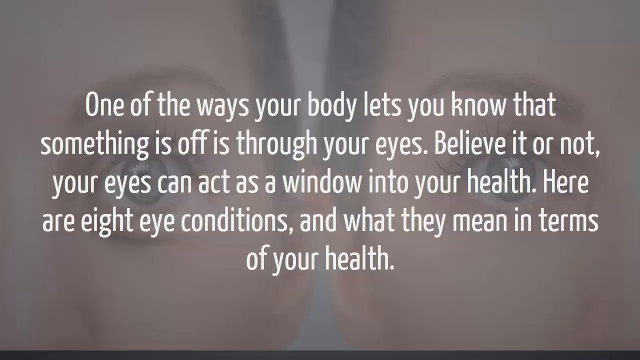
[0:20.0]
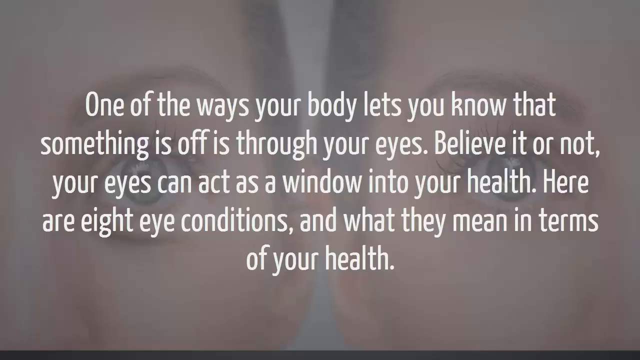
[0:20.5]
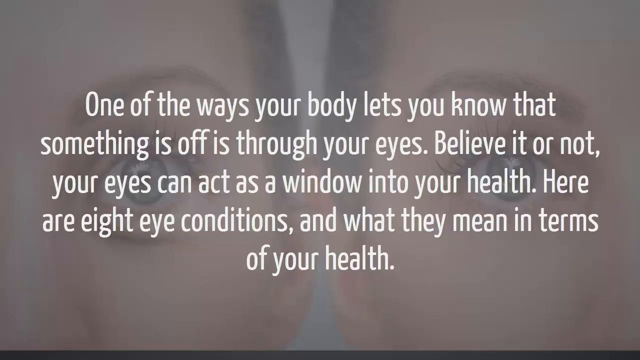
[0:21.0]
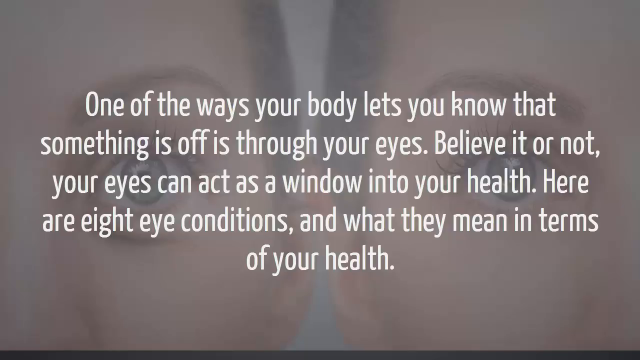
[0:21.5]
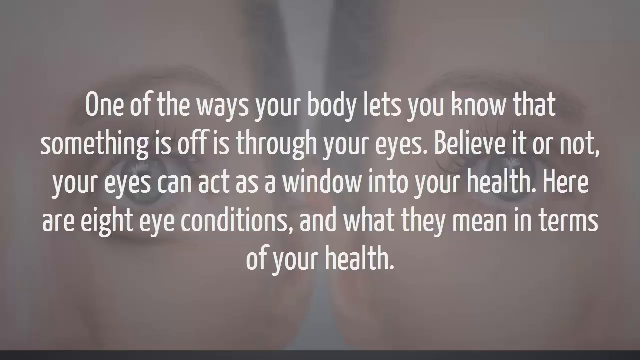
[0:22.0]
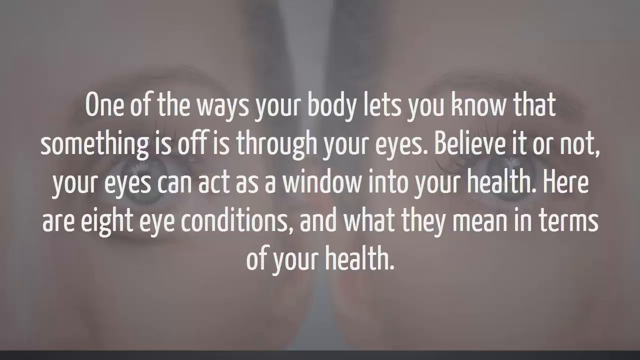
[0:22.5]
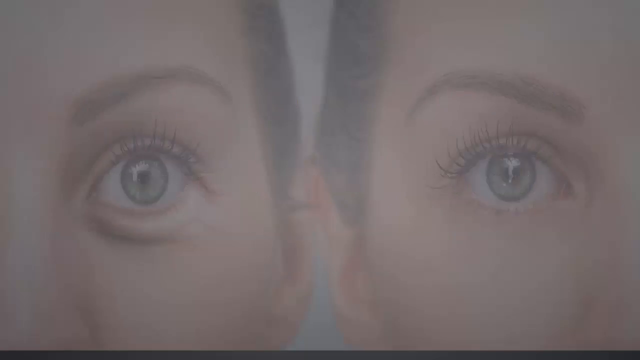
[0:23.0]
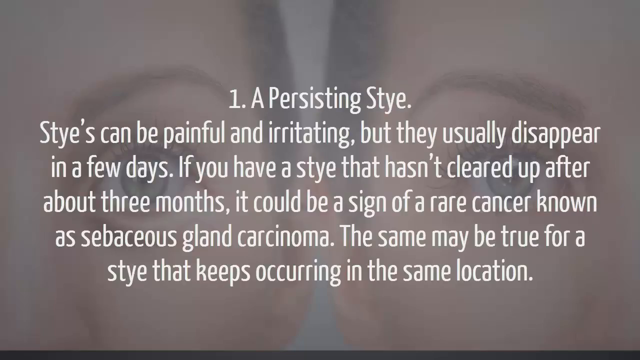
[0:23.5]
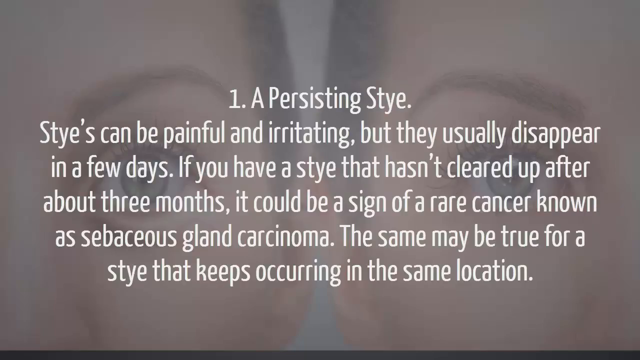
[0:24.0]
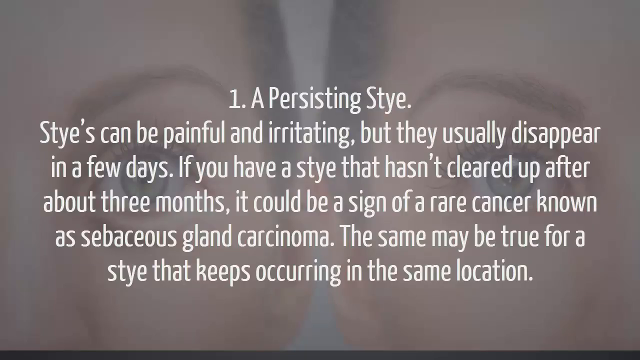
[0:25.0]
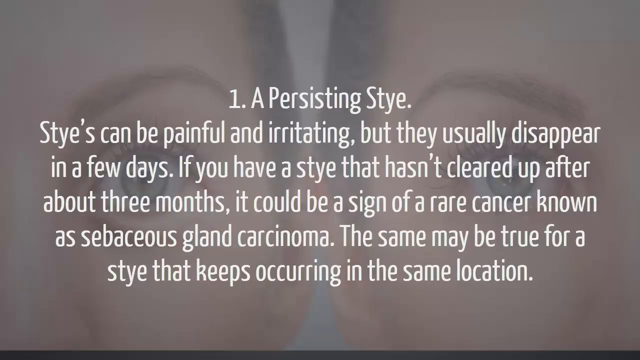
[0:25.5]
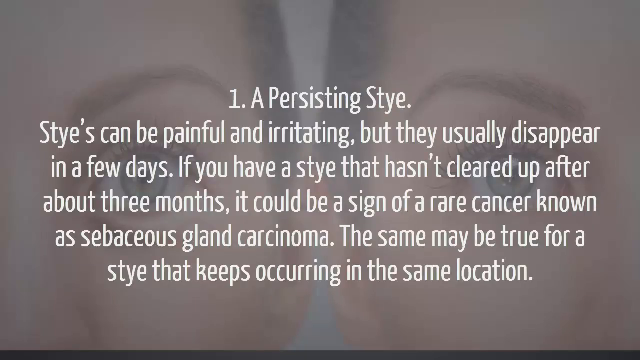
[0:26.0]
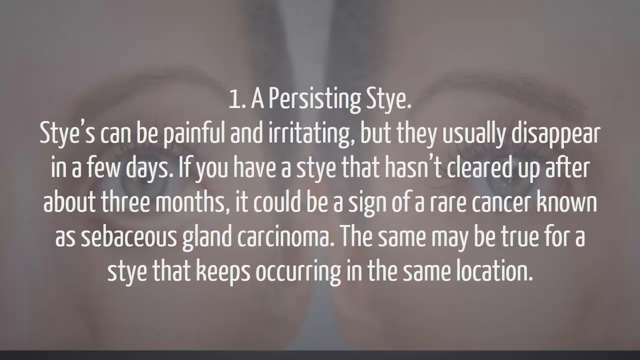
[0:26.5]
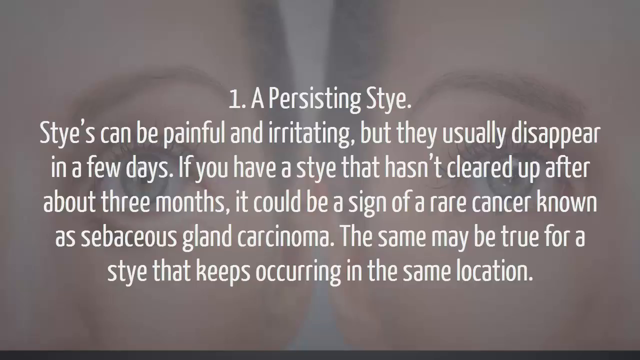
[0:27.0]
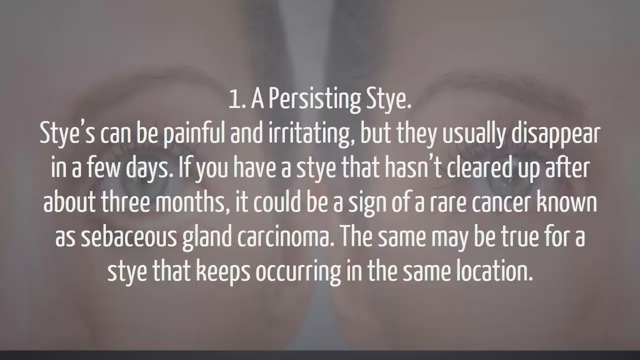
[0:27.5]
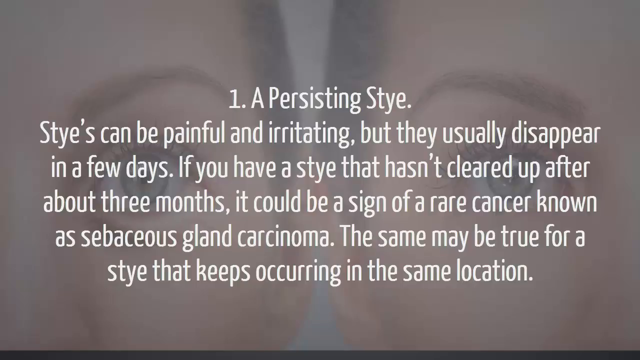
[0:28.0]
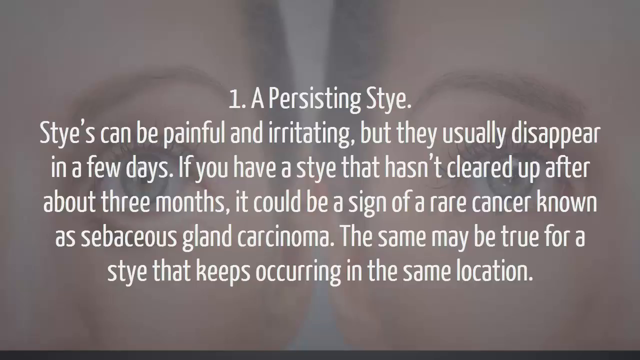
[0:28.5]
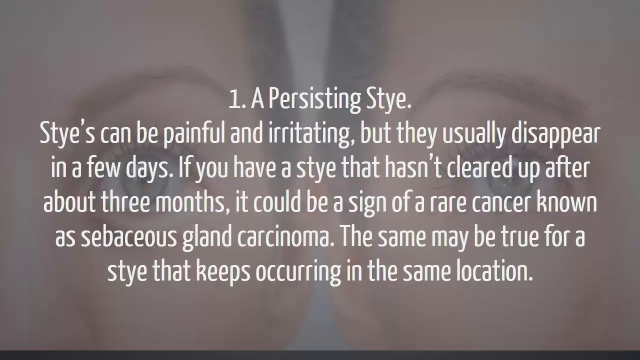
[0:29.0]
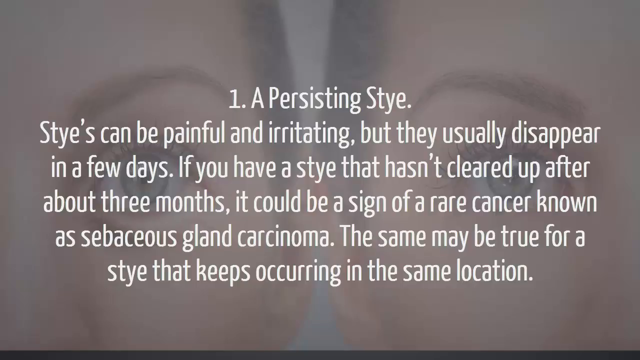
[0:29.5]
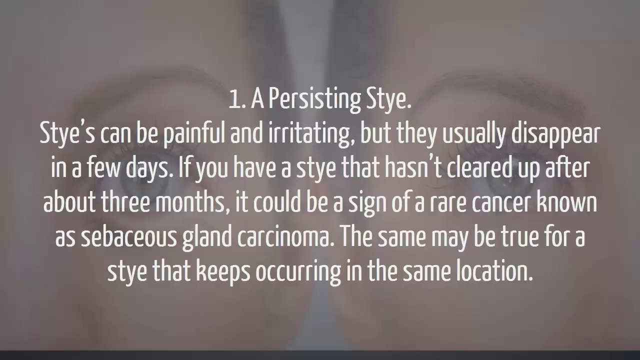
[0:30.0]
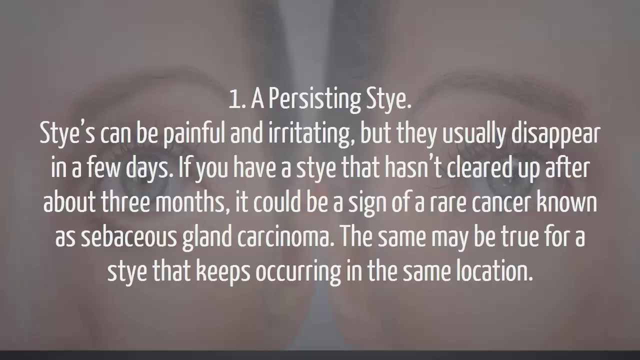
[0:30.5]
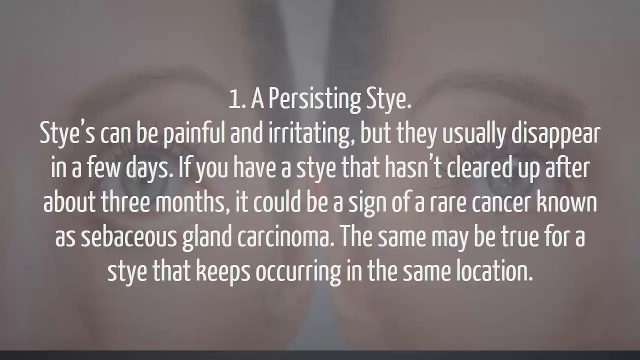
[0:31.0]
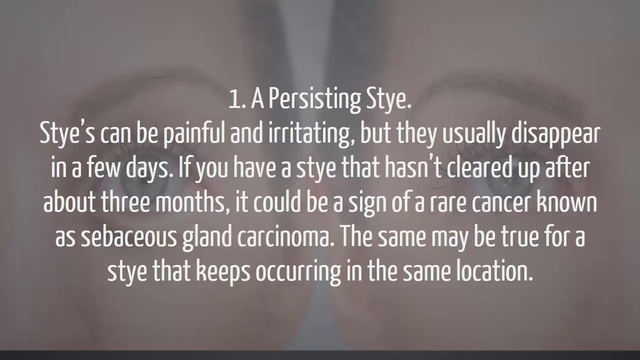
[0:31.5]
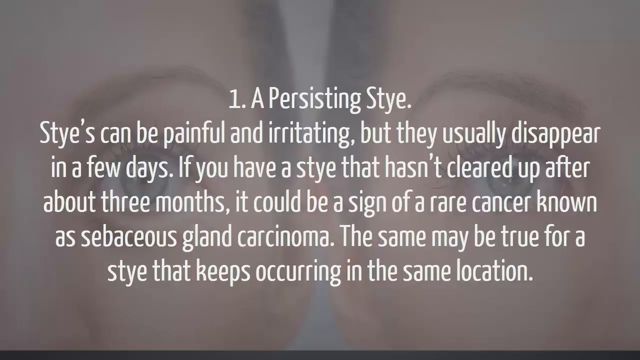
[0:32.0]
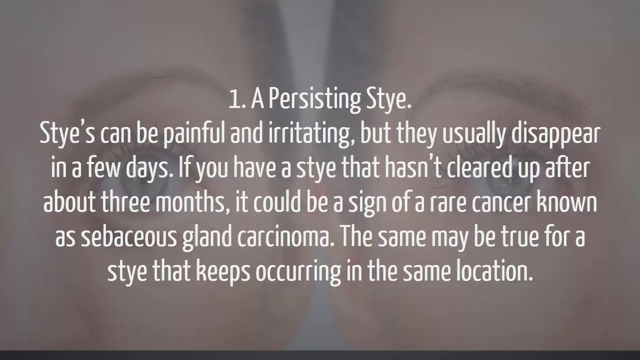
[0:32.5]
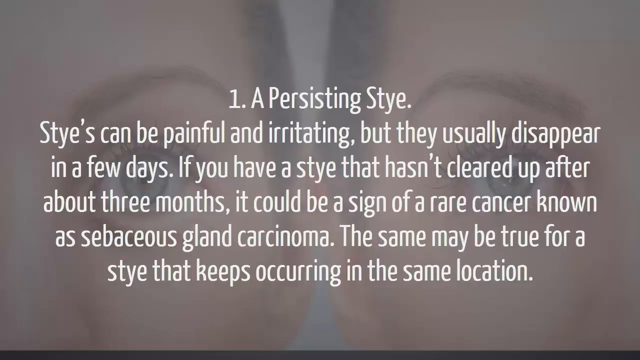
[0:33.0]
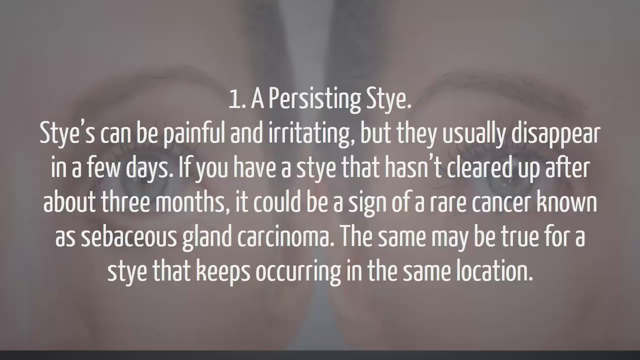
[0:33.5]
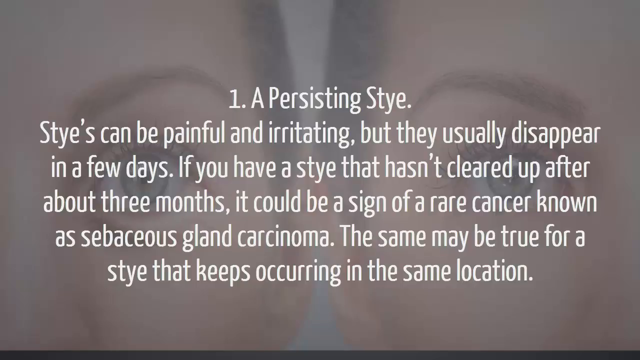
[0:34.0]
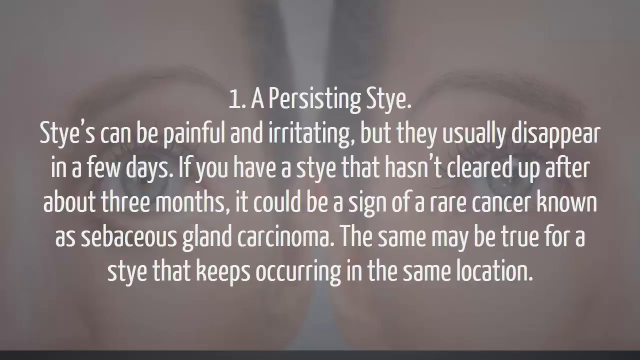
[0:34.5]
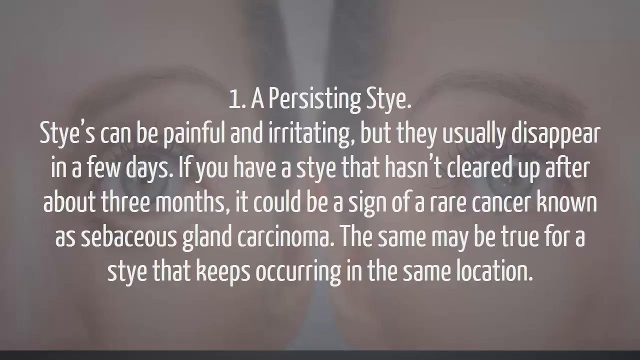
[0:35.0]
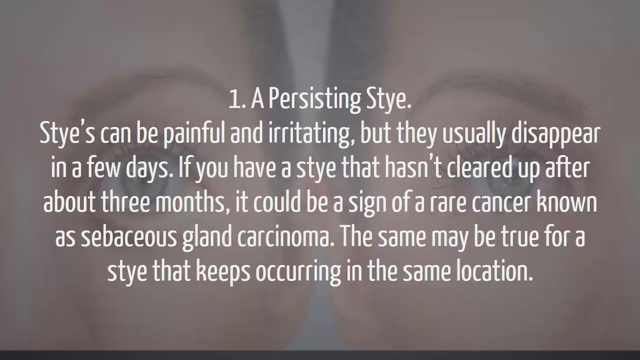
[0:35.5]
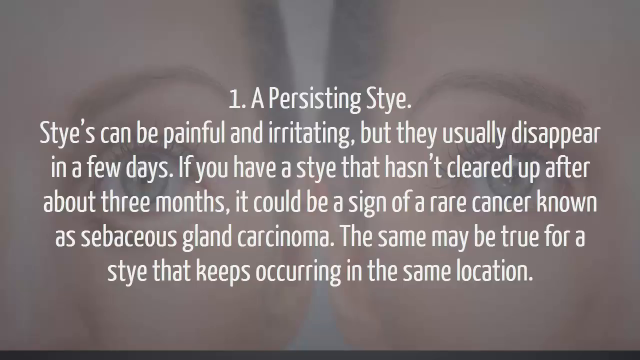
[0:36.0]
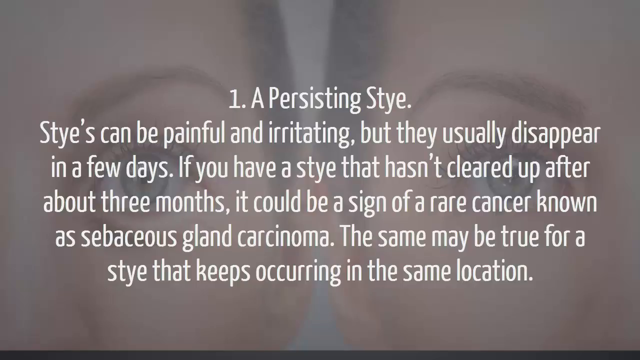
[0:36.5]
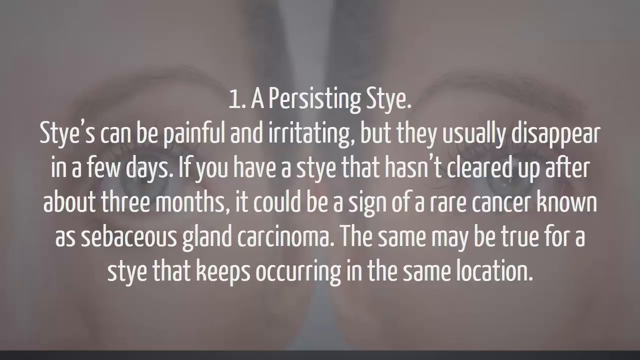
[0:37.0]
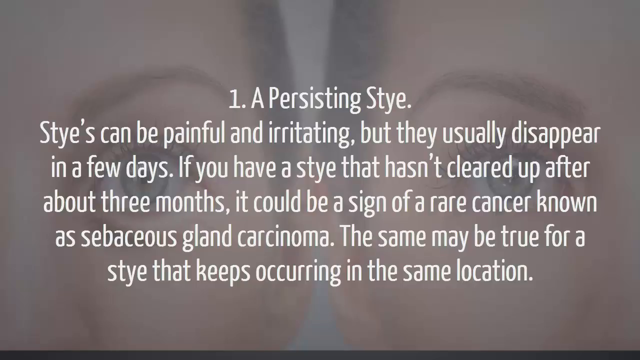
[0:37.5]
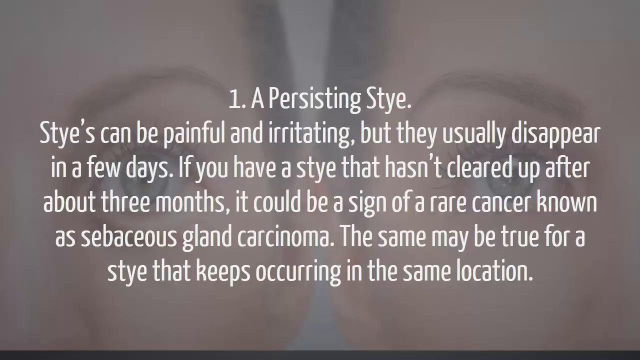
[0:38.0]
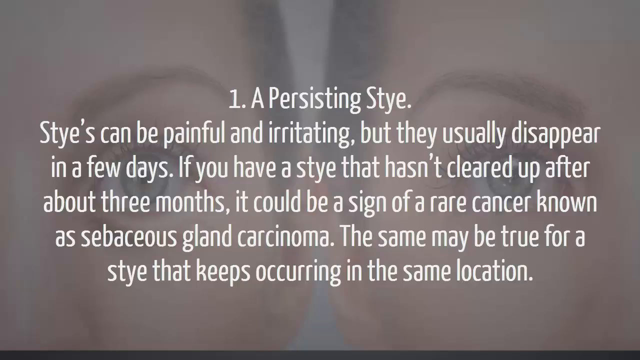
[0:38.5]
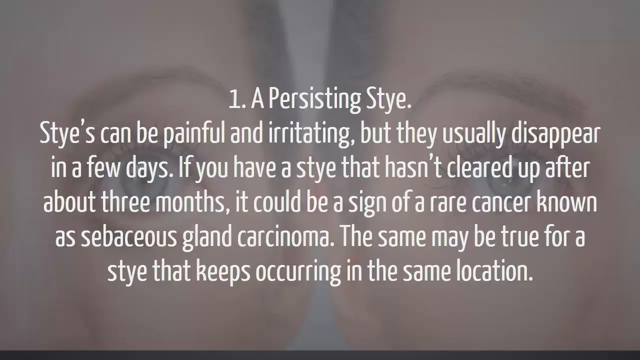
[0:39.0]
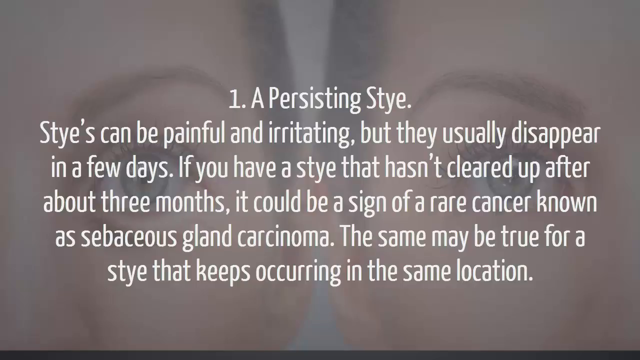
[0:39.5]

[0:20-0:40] Two people are in the background, one on the right and one on the left, with only half of each face visible, from the nose over to the ear. Both look like women, and the main visible feature is each one's eye looking directly forward. Text on the screen reads: "One of the ways your body lets you know that something is off is through your eyes. Believe it or not, your eyes can act as windows into your health. Here are eight eye conditions and what they mean in terms of your health." The next text reads: "One, a persisting stye. Styes can be painful and irritating, but they usually disappear in a few days. If you have a stye that hasn't cleared up after about three months, it could be a sign of a rare cancer known as sebaceous gland carcinoma. The same may be true for a stye that keeps occurring in the same location."